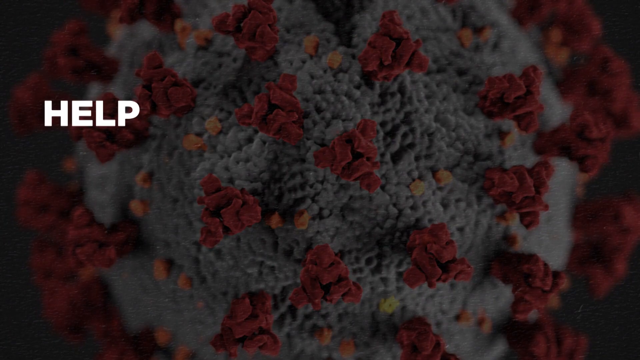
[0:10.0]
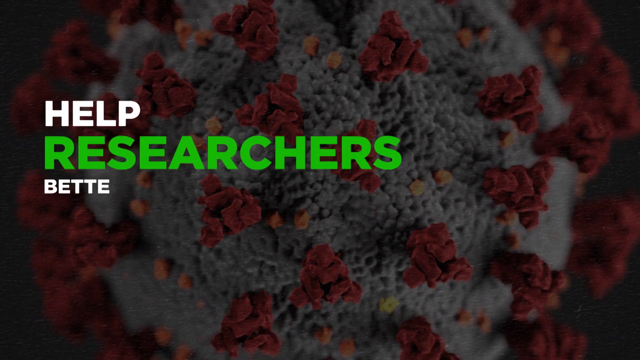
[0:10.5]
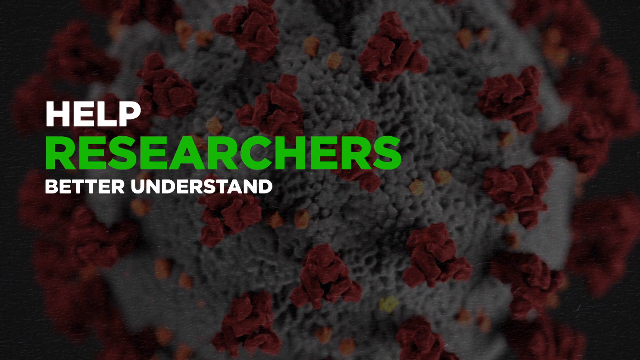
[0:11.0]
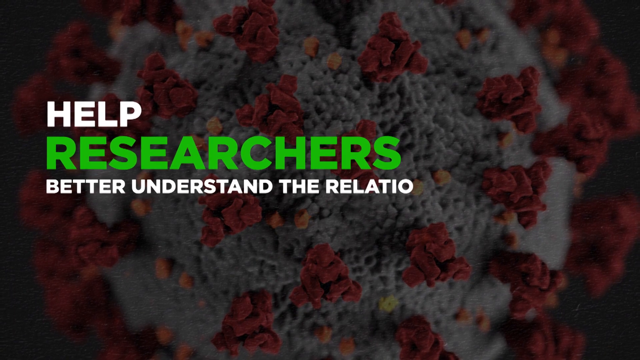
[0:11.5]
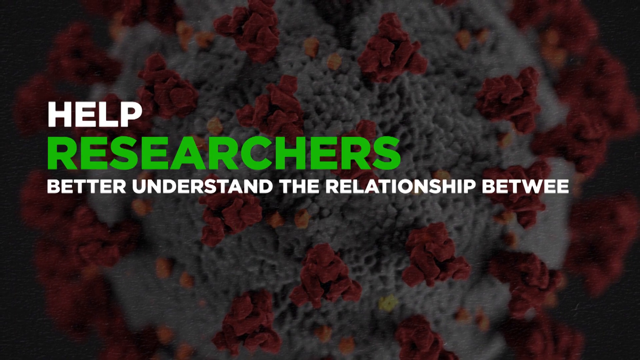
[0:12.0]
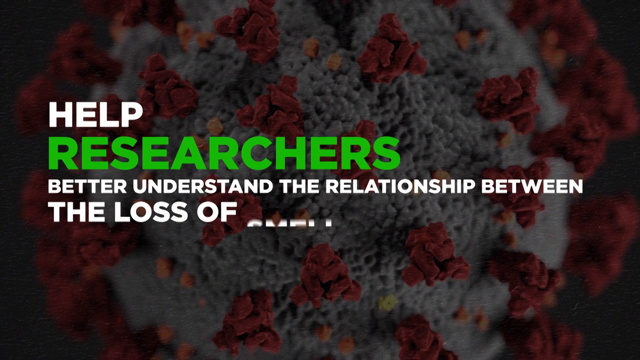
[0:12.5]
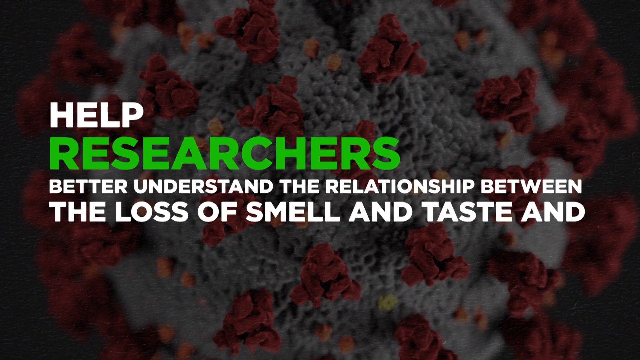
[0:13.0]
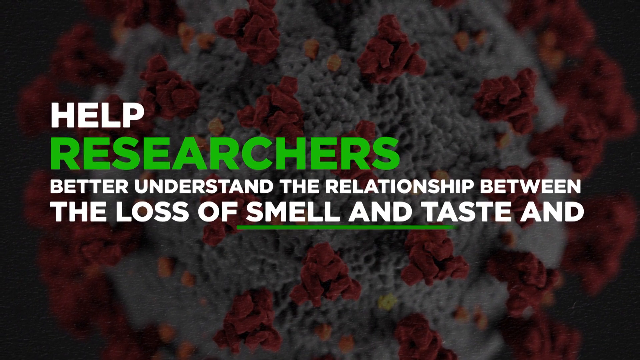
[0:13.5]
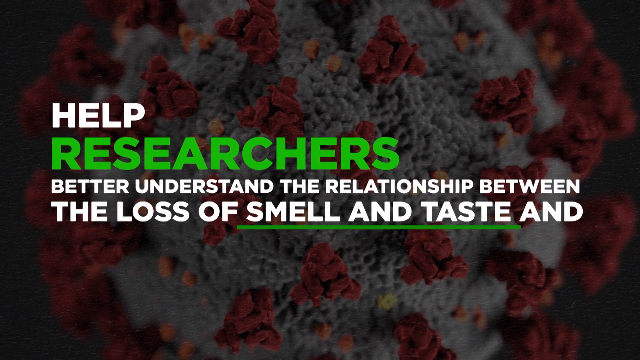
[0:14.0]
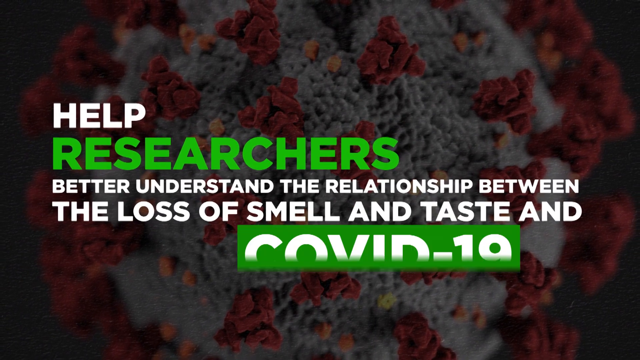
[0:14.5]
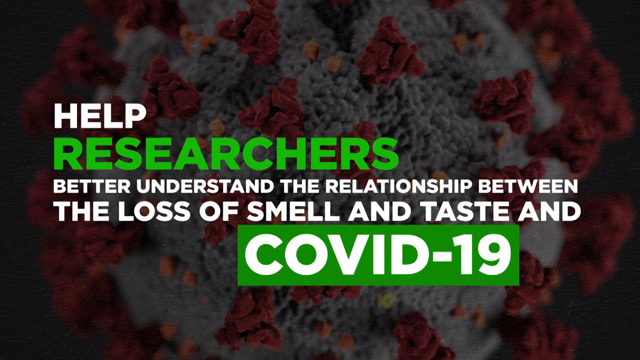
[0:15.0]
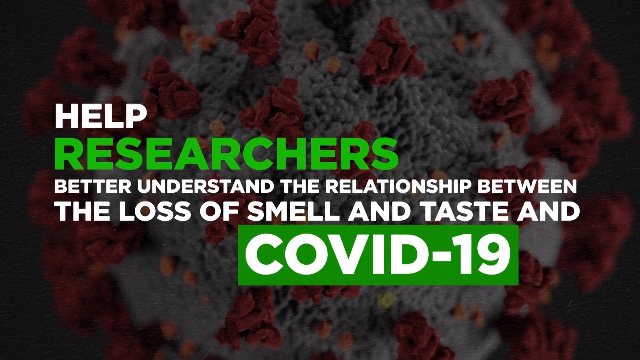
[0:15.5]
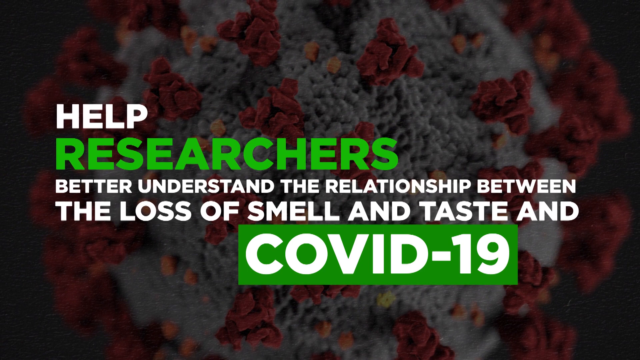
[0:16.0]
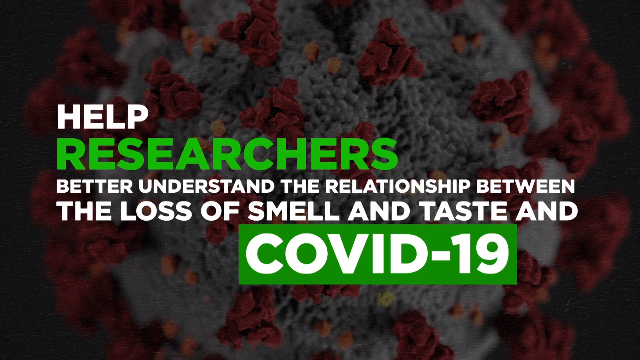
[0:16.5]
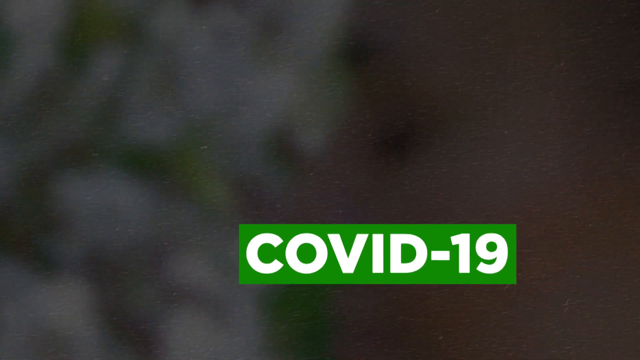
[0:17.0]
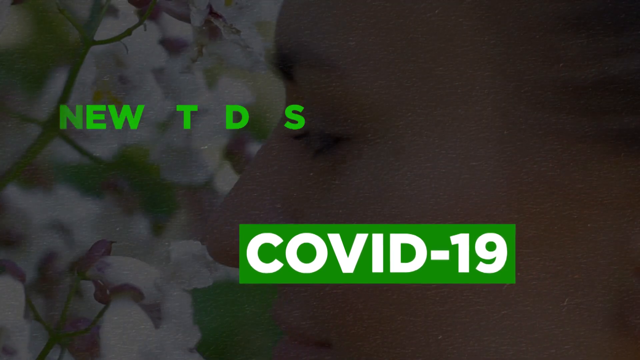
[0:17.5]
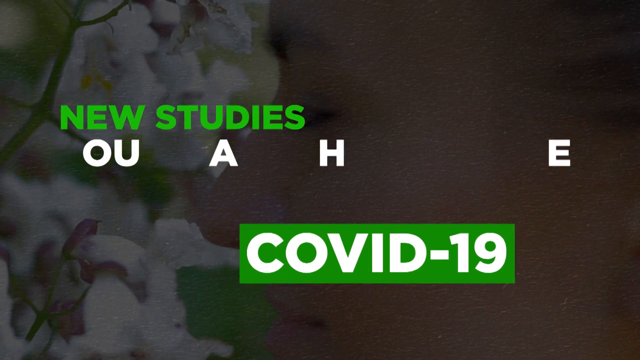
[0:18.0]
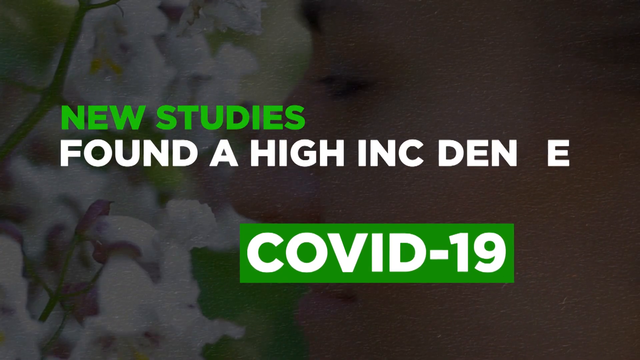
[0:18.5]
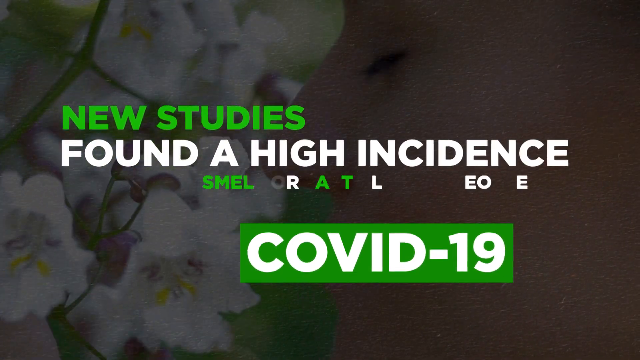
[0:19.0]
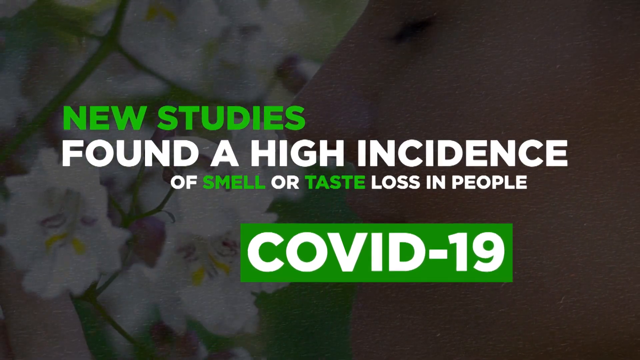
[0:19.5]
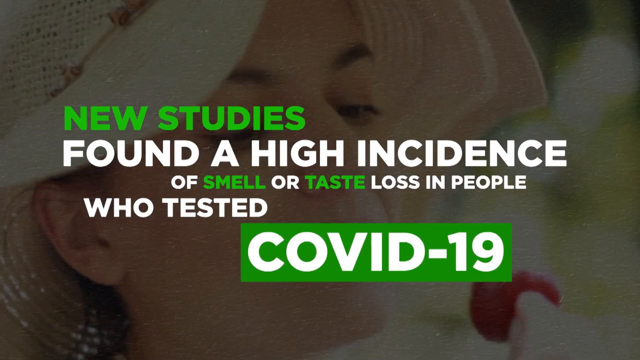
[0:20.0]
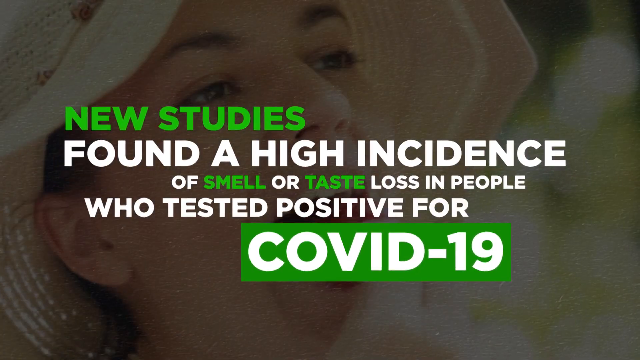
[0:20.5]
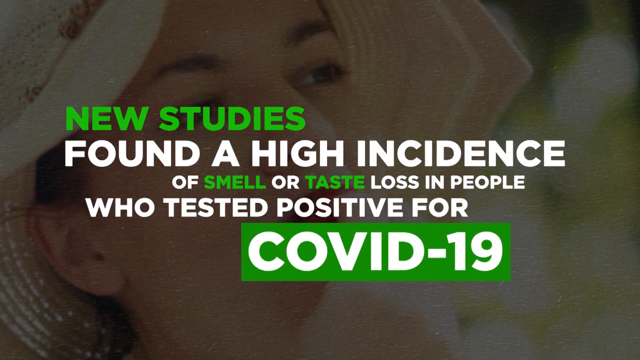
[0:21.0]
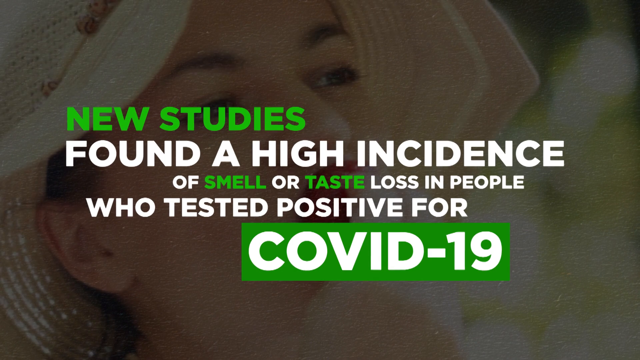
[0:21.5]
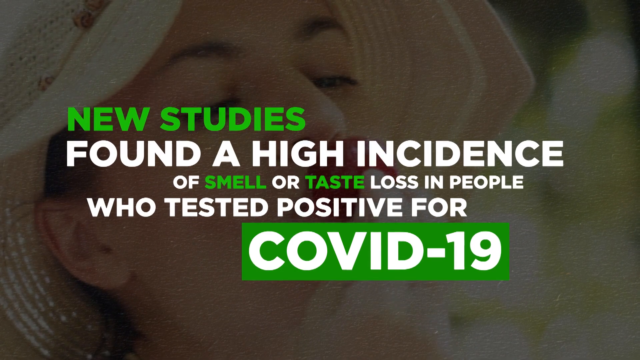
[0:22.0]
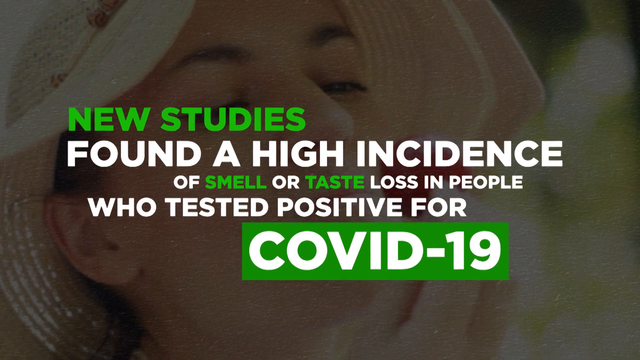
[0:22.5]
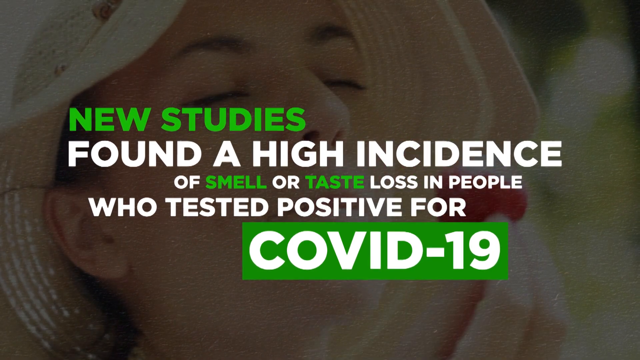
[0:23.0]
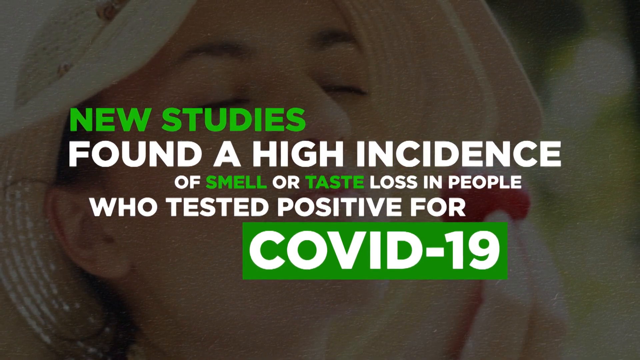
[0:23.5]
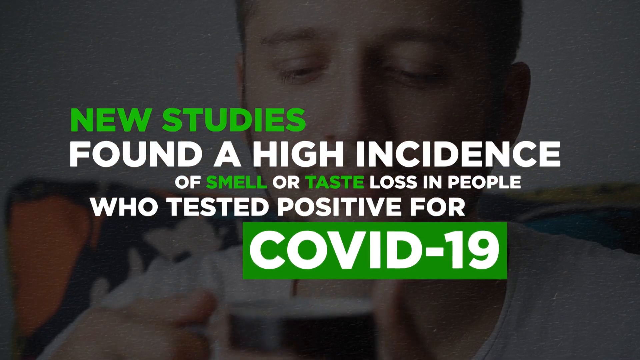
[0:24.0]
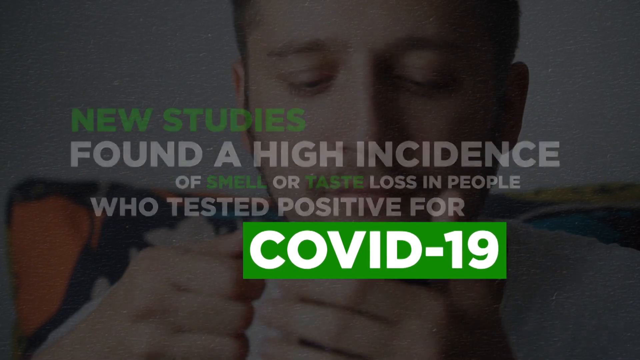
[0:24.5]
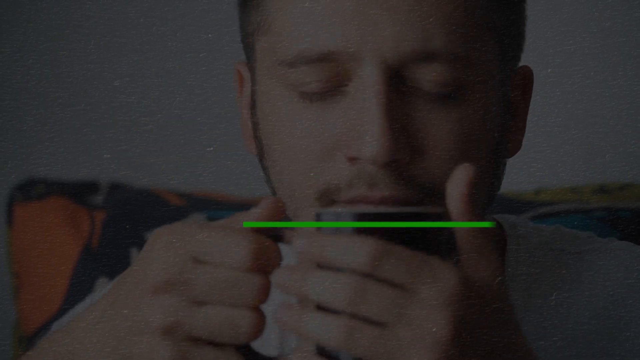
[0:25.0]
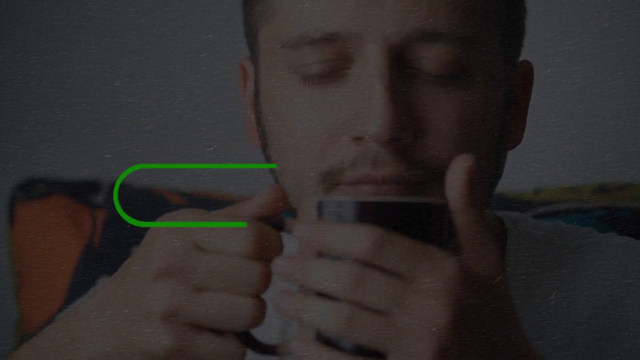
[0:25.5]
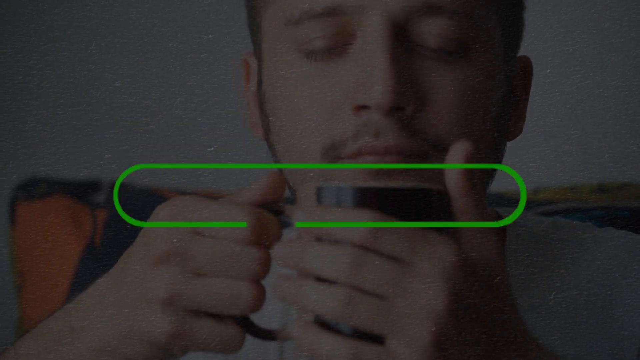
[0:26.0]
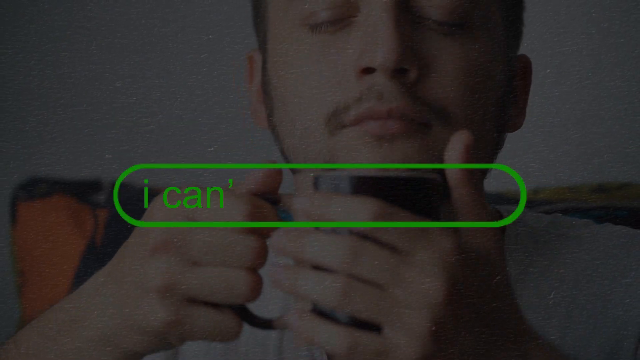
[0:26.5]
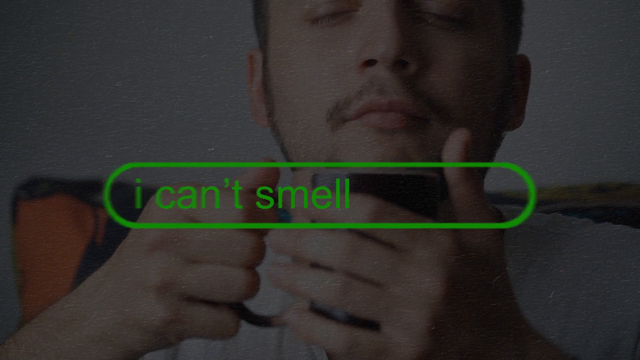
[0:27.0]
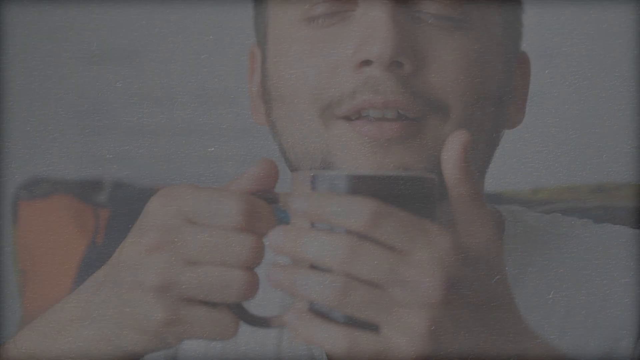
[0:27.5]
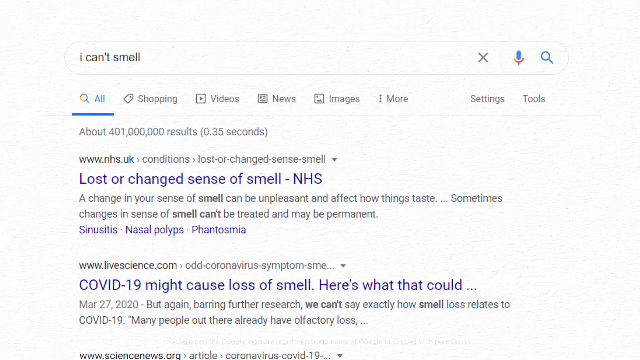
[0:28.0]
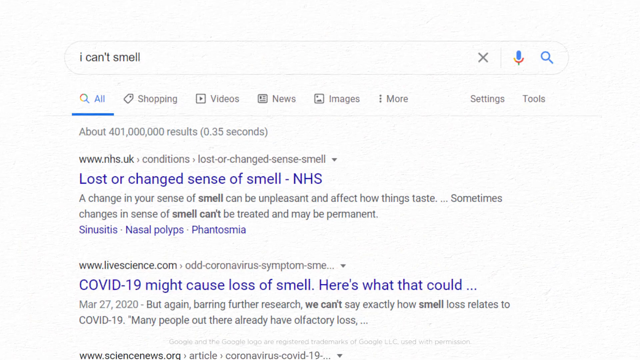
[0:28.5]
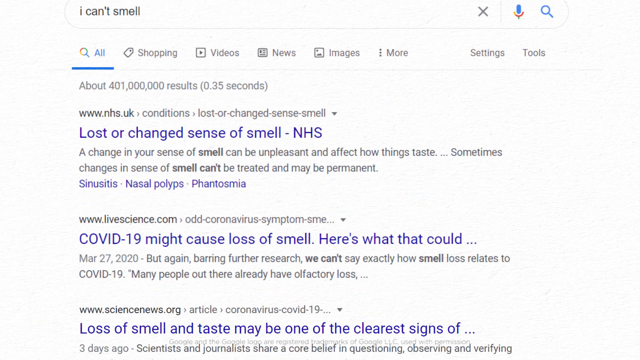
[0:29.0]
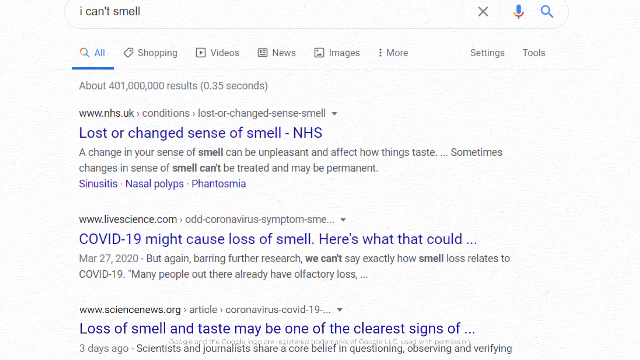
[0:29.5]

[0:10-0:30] On a dark screen, a gray design with small fuzzy red balls fills the background. The word "help" appears across the screen in white, with "researchers" in green beneath it, and below that in white: "better understand the relationship between the loss of smell and taste and COVID-19." That text disappears and new text appears: "new studies" in green, then "found a high incident" in white; beneath that "of" in white, "smell" in green, "or" in white, "taste" in green, and "loss in people" in white. Below that, "COVID-19" is written in white inside a green rectangle, with "who's positive for" above the rectangle. The screen then goes dark, and a picture shows a man sitting down, holding a cup of something and smelling it.